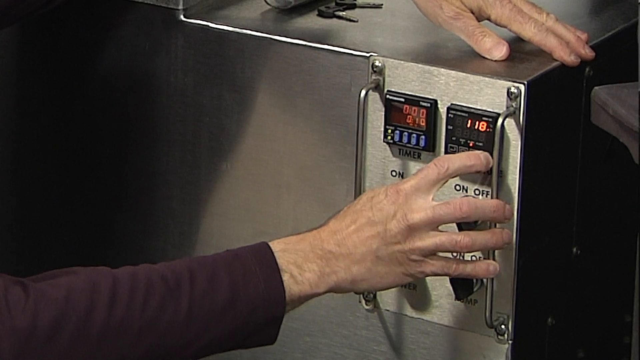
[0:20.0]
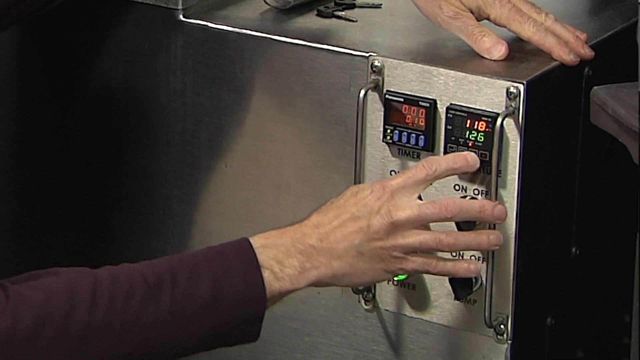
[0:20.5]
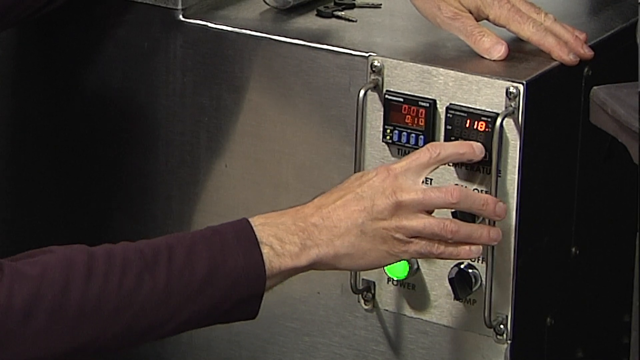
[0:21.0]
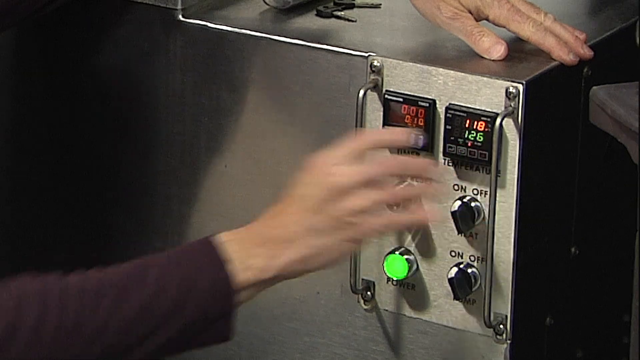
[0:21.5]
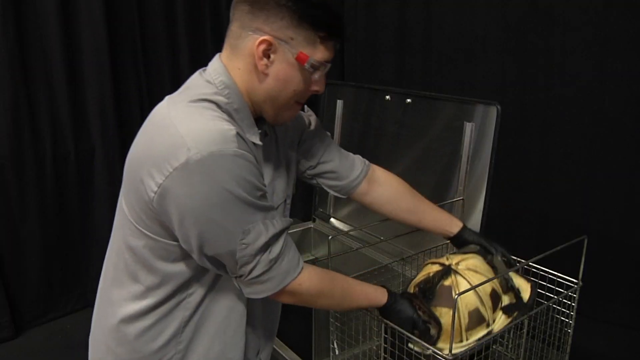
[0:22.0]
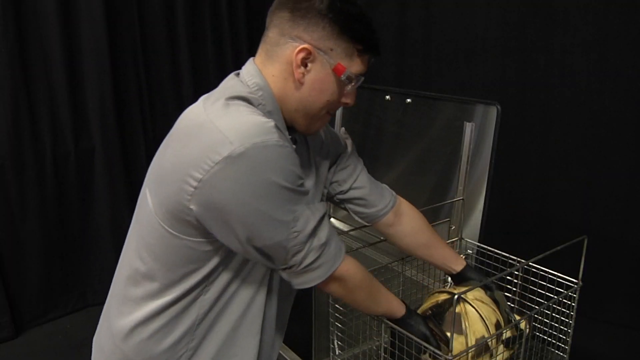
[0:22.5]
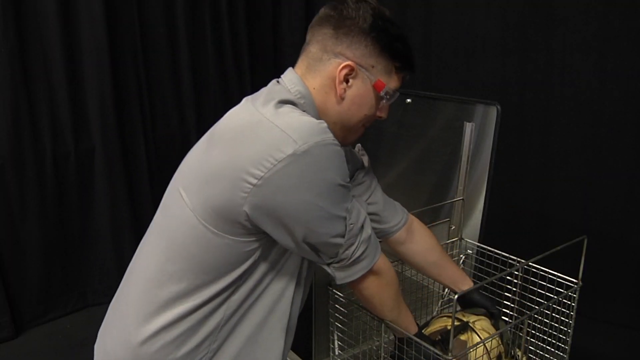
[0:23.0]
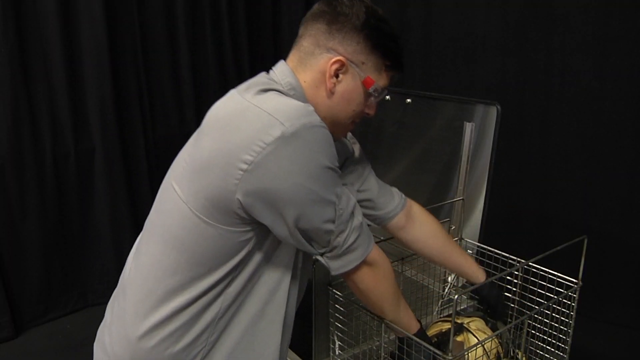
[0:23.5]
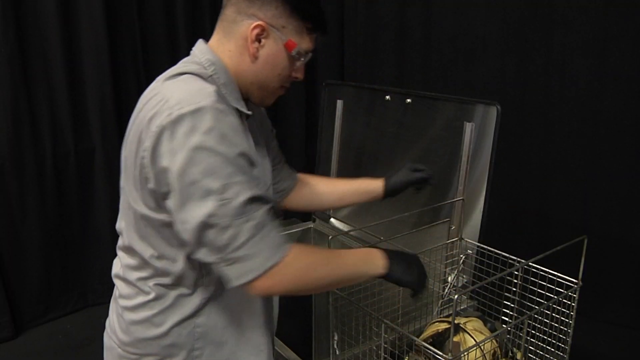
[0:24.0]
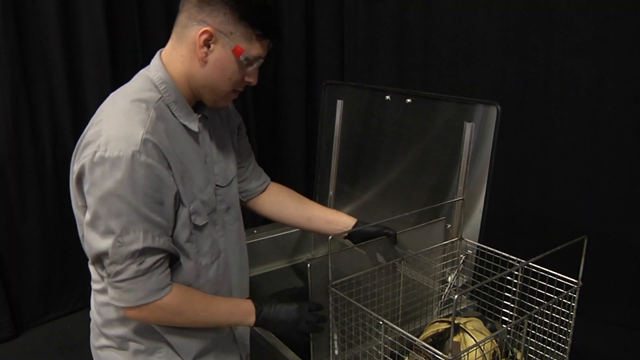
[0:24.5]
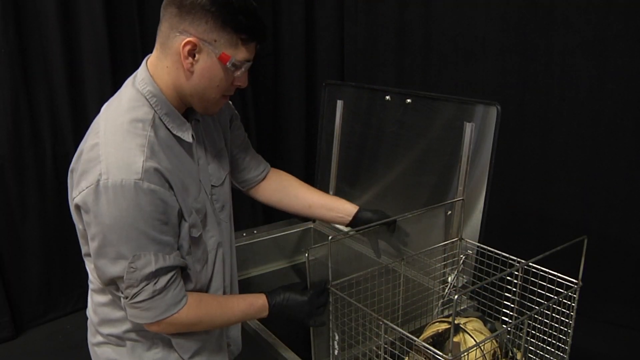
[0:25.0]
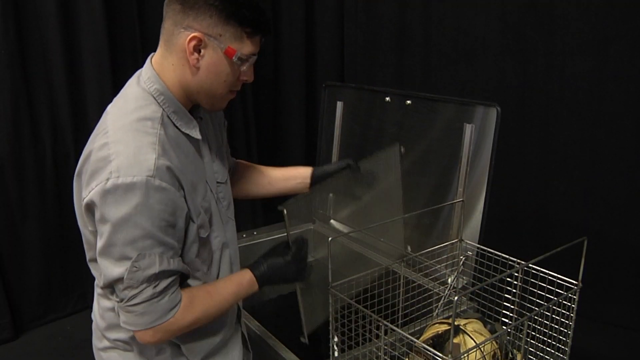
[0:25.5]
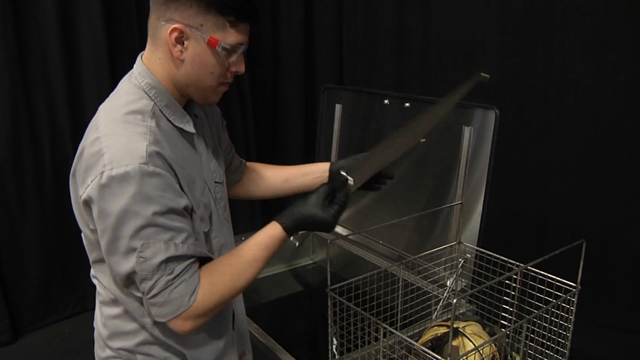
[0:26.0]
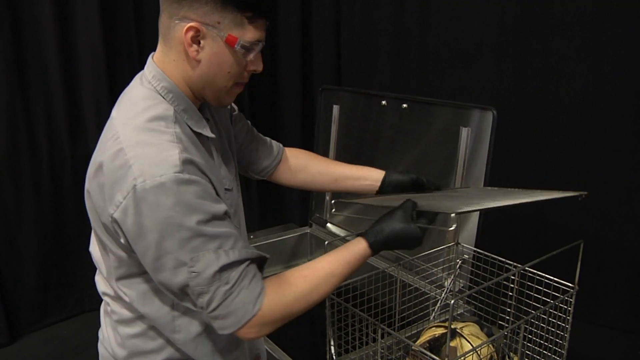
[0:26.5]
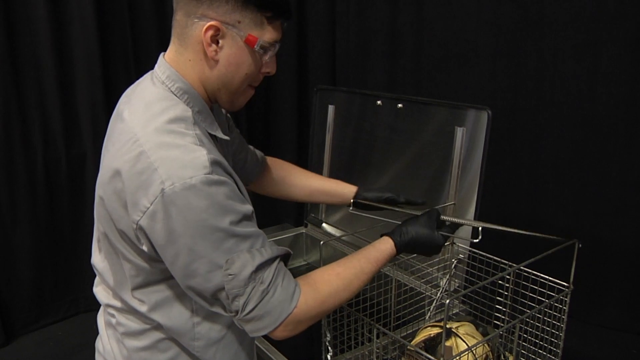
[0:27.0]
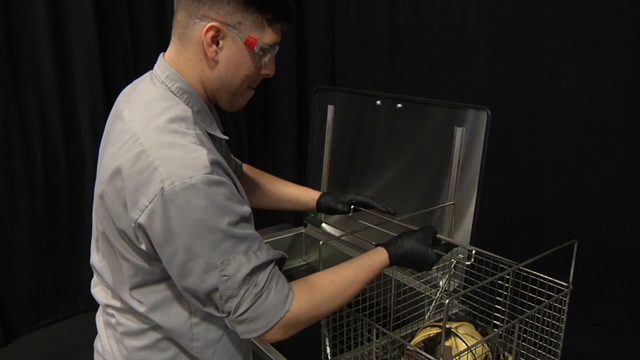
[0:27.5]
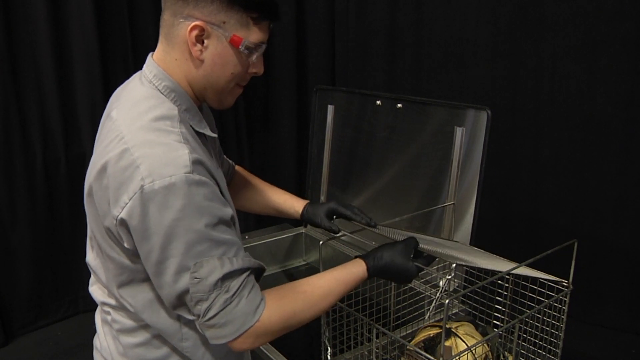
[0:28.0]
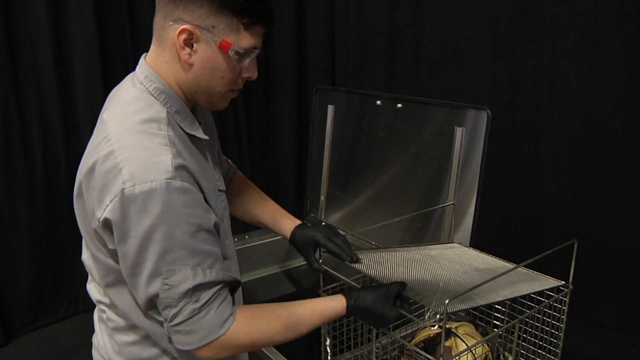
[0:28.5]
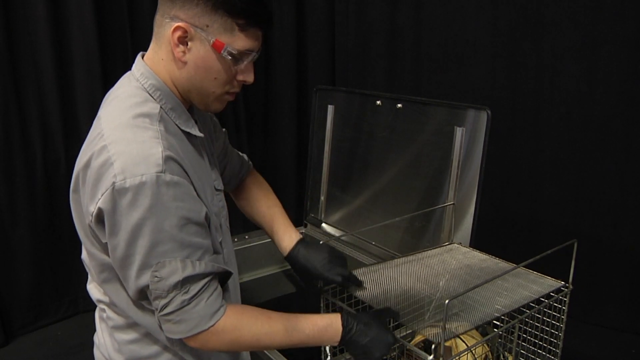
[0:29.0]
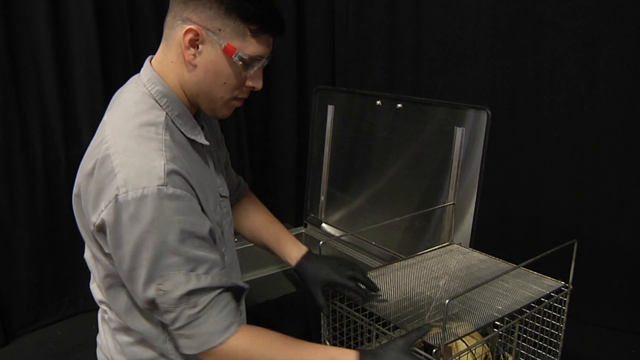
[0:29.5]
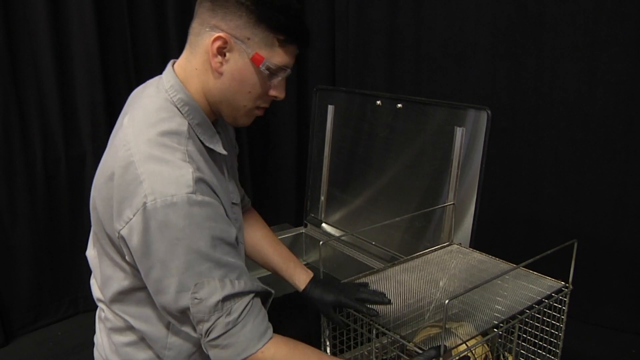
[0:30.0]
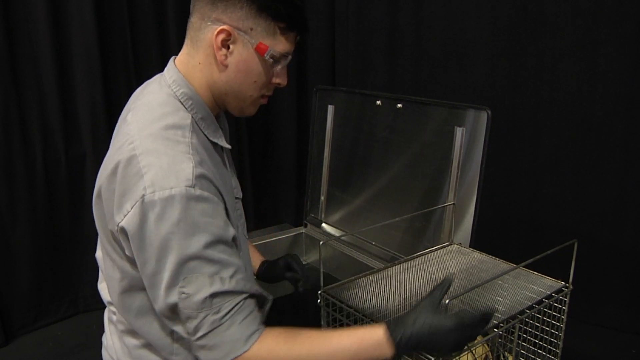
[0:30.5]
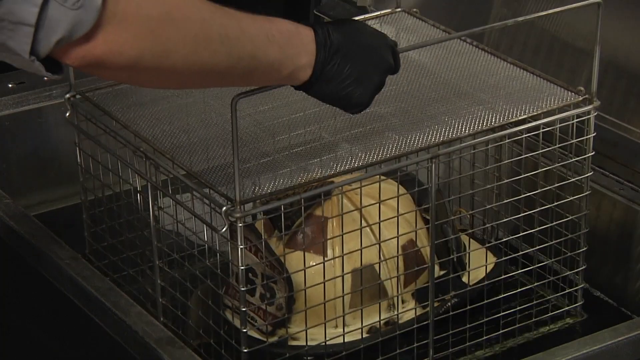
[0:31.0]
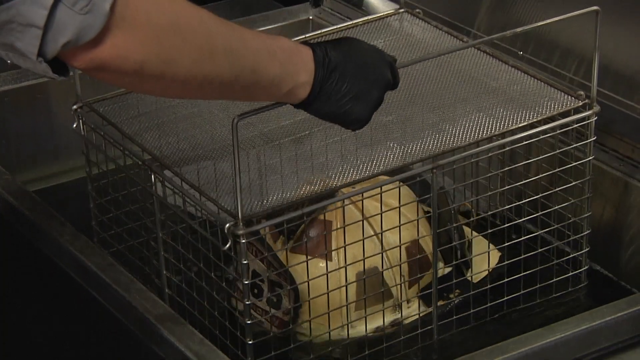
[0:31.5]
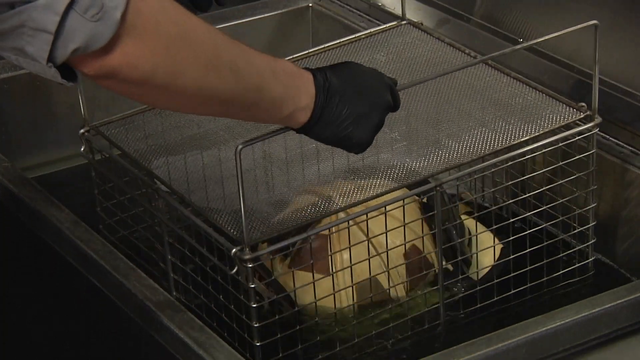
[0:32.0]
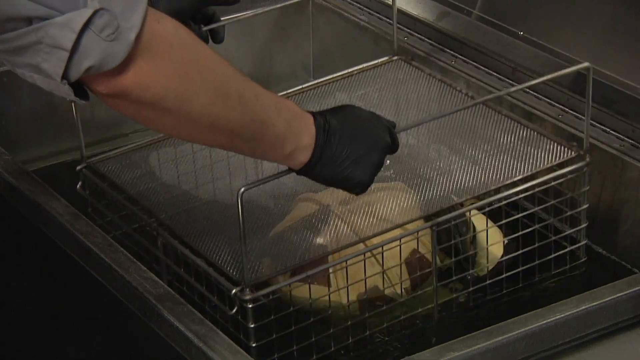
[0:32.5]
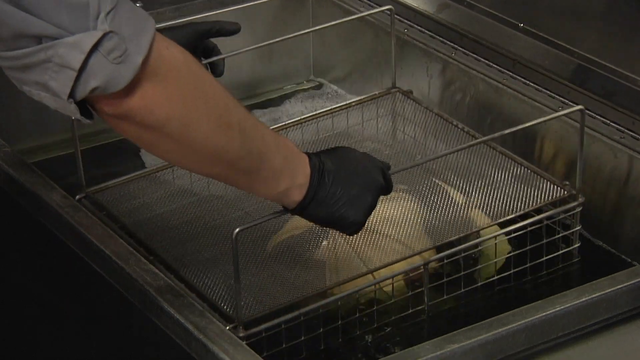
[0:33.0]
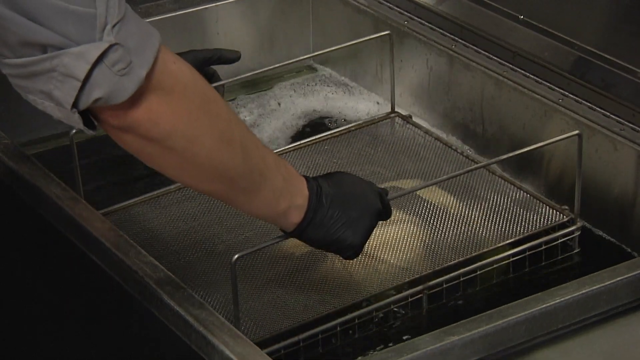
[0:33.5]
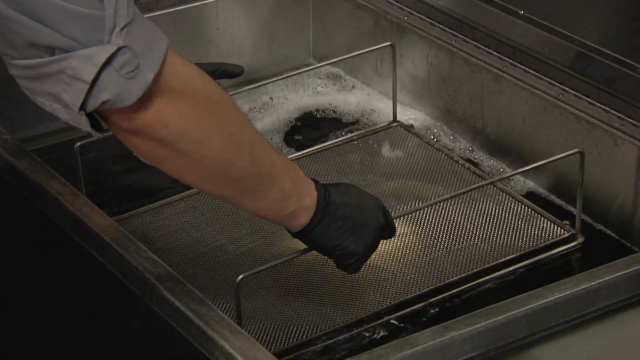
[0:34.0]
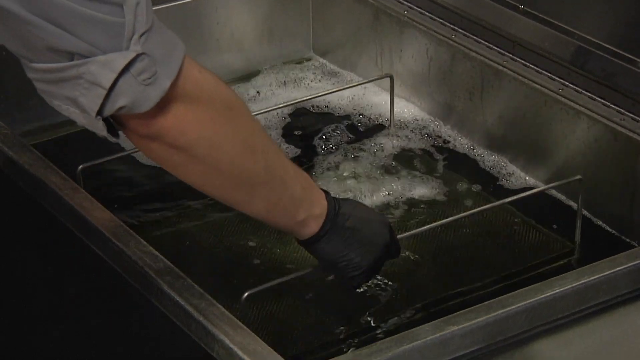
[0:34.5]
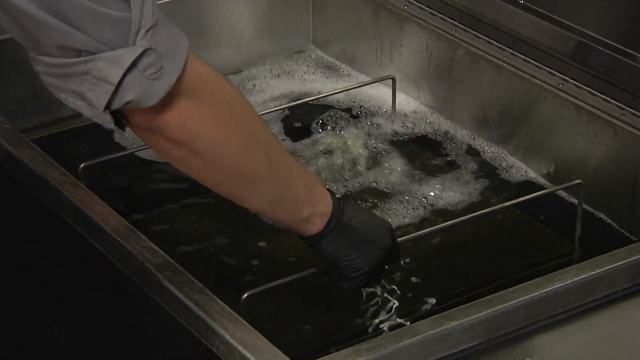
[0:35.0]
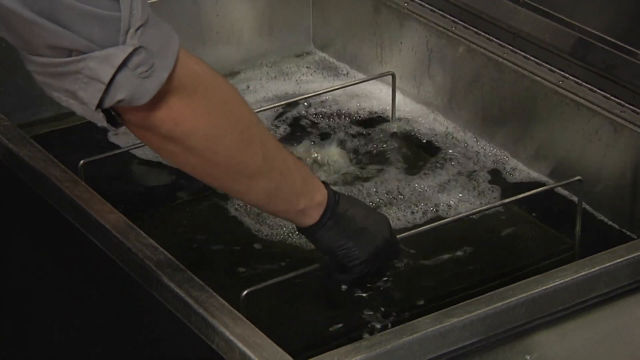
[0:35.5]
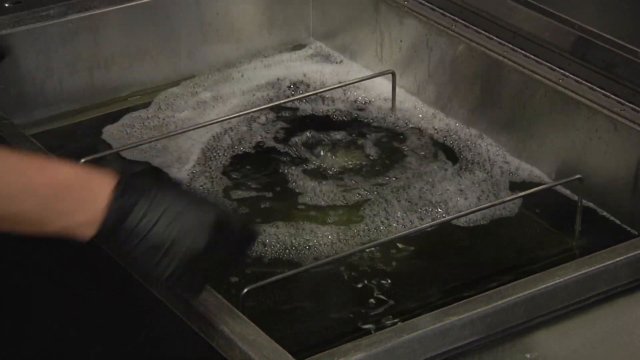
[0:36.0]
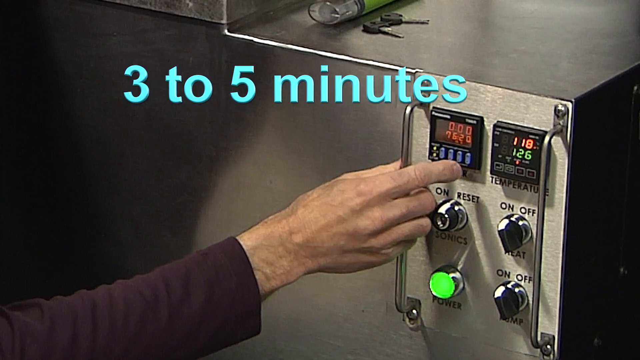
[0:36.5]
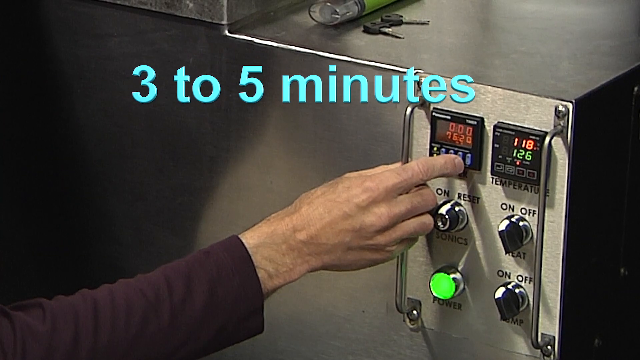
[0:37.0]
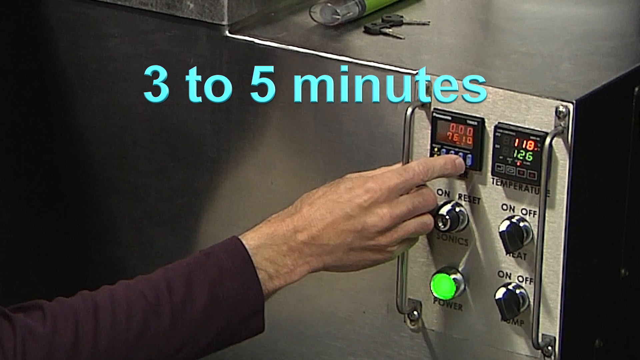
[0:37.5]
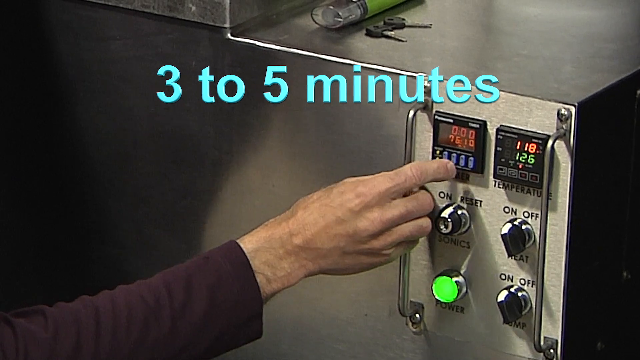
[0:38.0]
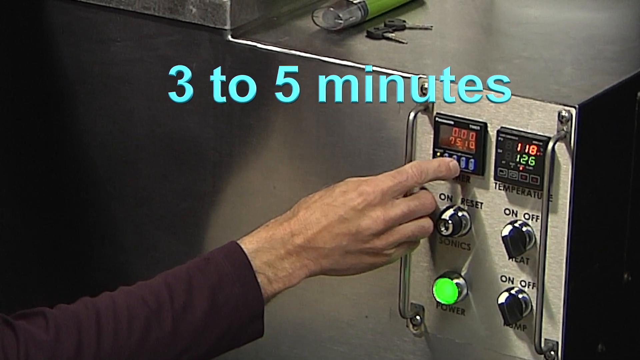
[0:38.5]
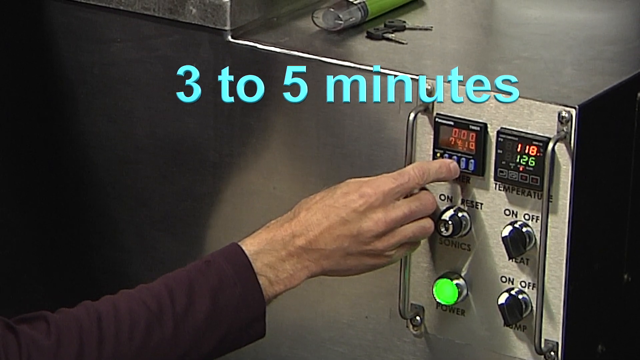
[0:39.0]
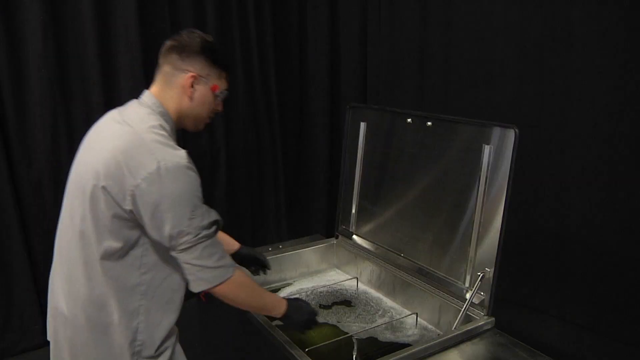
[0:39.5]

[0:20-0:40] A machine with a square area full of liquid is shown, then a woman's hands press buttons on a digital display on the front of the machine while the left hand rests on top of the silver machine. As the buttons are pressed, red and green digital numbers begin to flash. The video cuts to a man wearing a gray short-sleeved work shirt and clear goggles with red on the sides. He puts a dirty, smoke-covered yellow firefighter's helmet into a metal-weighted basket, places a mesh screen onto the top of the basket, and lowers the basket into a bubbling liquid. The woman's hand is seen again pressing buttons on the silver machine, and text that says "three to five minutes" appears on the screen. The video cuts back to the man in front of the bubbling liquid, who grasps either side of the basket and removes it from the bubbling liquid.